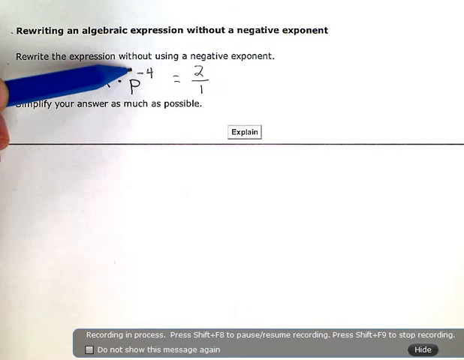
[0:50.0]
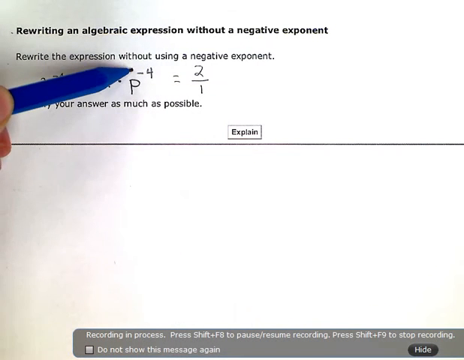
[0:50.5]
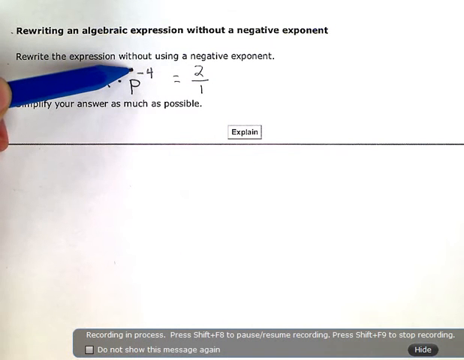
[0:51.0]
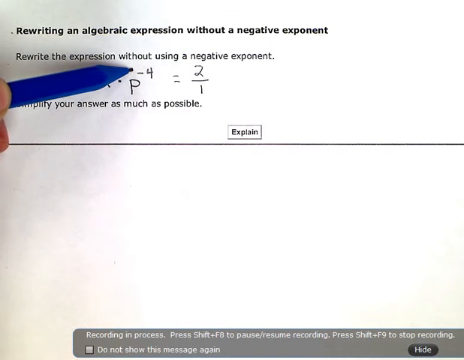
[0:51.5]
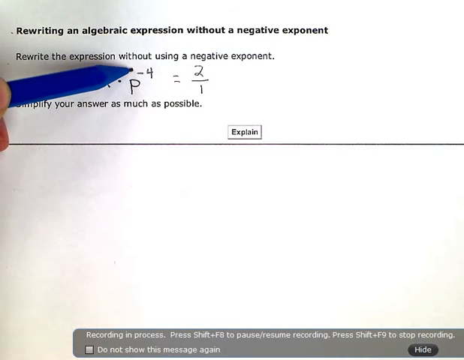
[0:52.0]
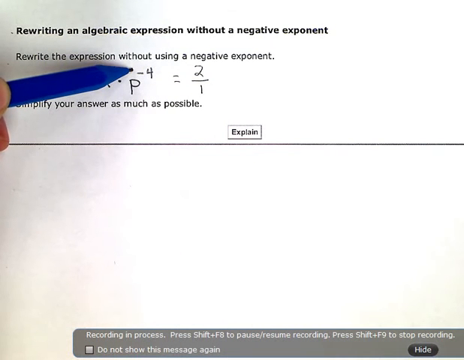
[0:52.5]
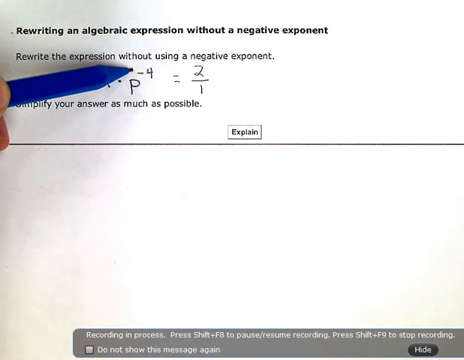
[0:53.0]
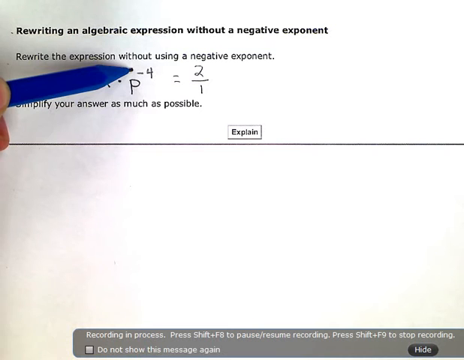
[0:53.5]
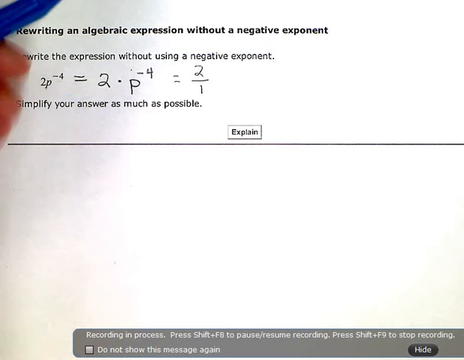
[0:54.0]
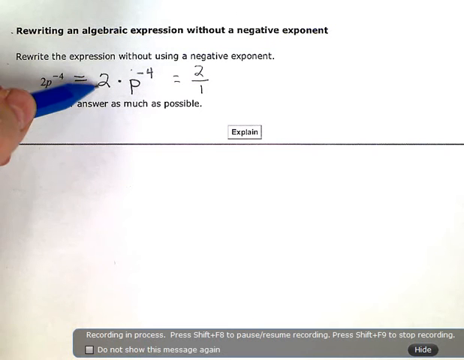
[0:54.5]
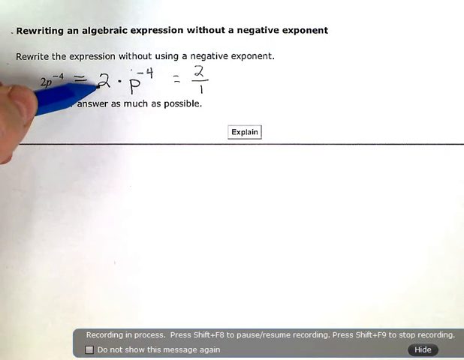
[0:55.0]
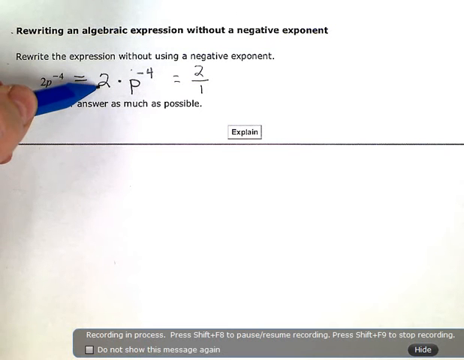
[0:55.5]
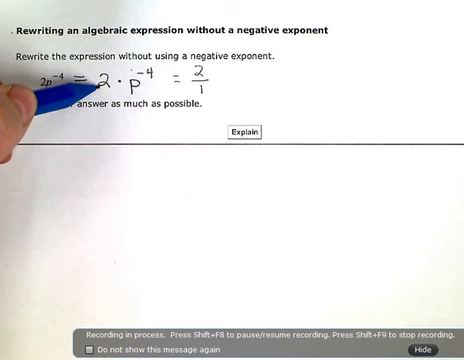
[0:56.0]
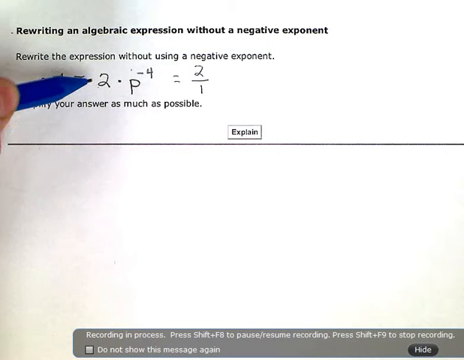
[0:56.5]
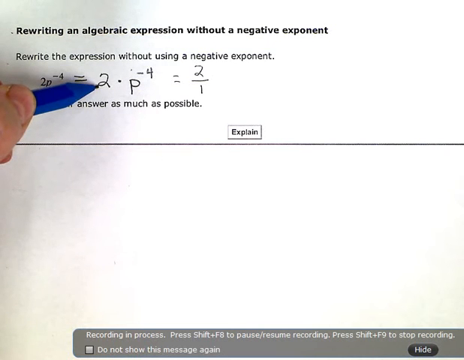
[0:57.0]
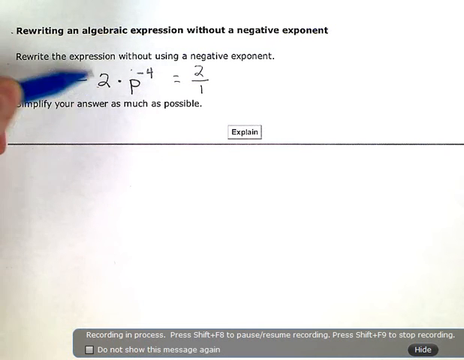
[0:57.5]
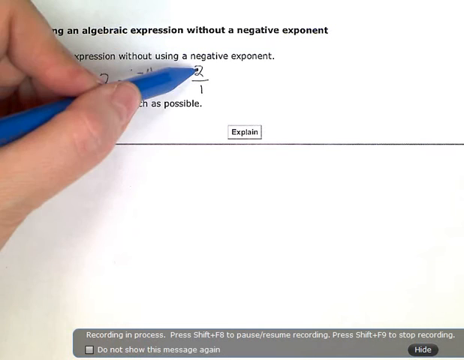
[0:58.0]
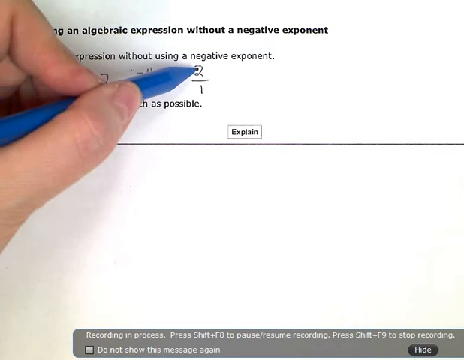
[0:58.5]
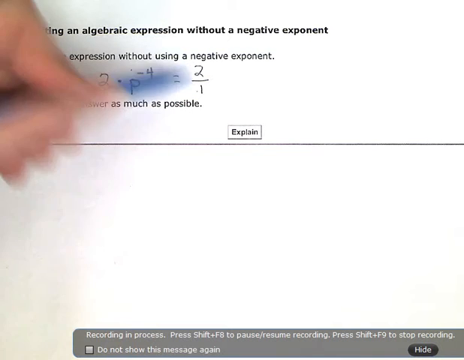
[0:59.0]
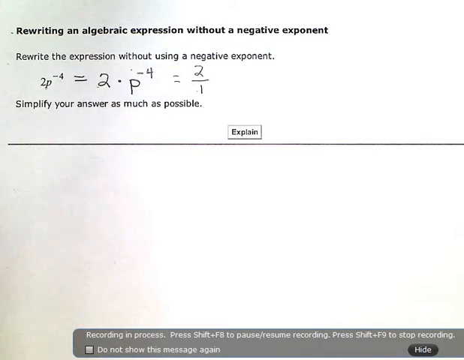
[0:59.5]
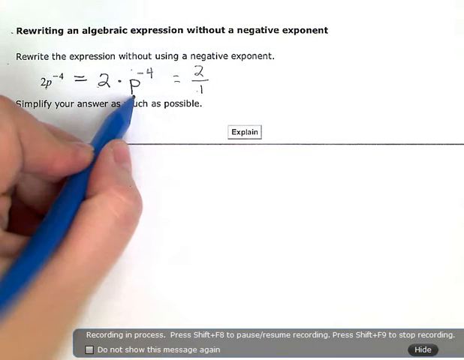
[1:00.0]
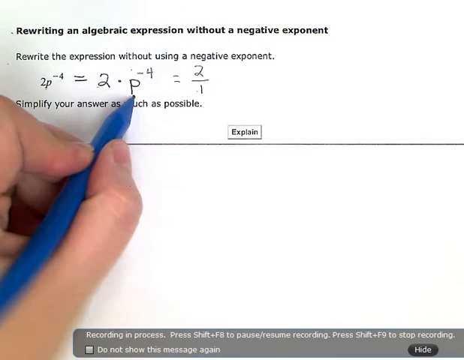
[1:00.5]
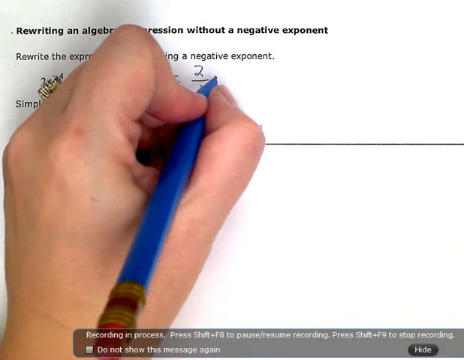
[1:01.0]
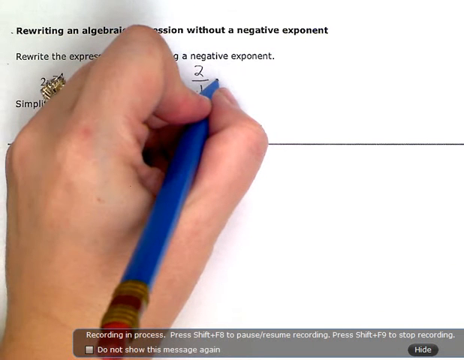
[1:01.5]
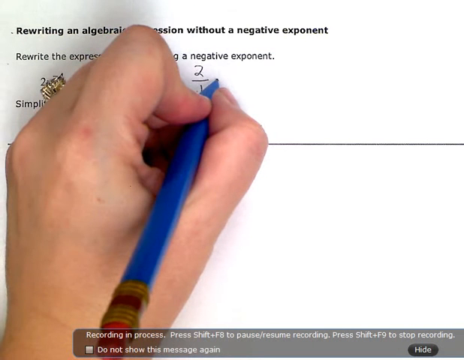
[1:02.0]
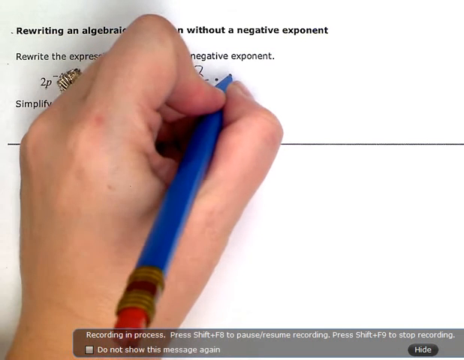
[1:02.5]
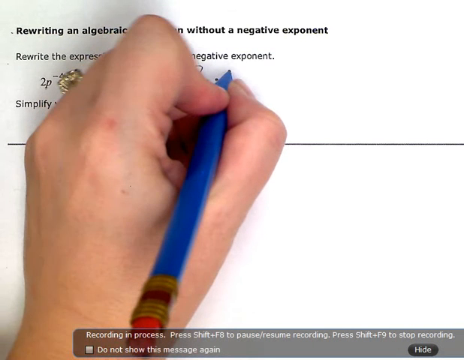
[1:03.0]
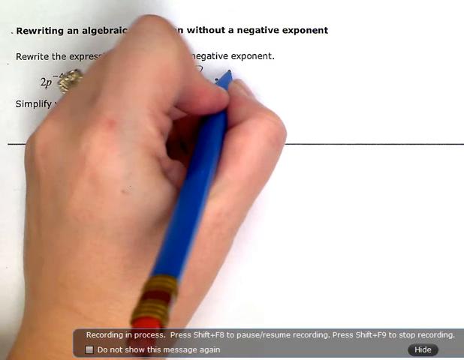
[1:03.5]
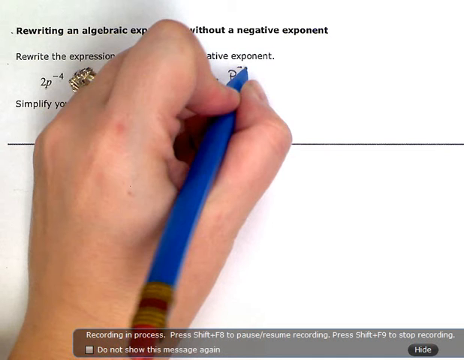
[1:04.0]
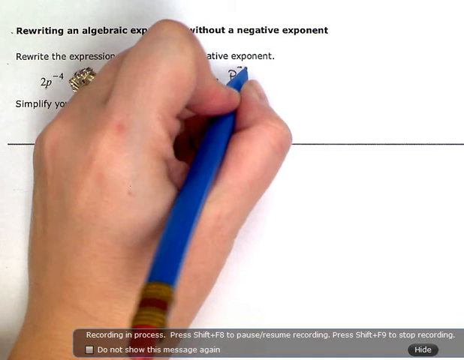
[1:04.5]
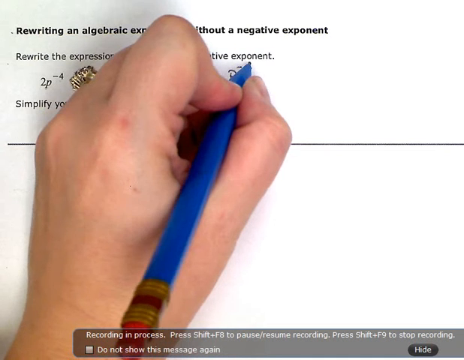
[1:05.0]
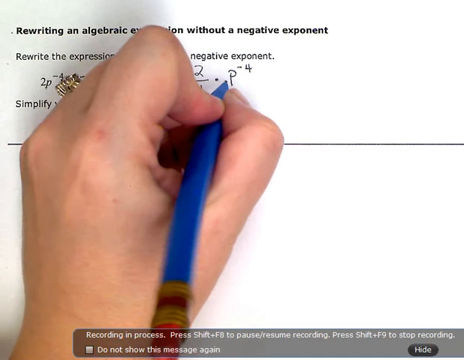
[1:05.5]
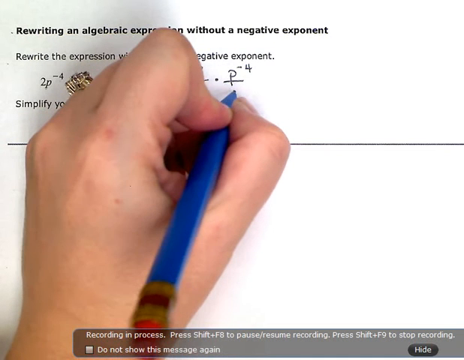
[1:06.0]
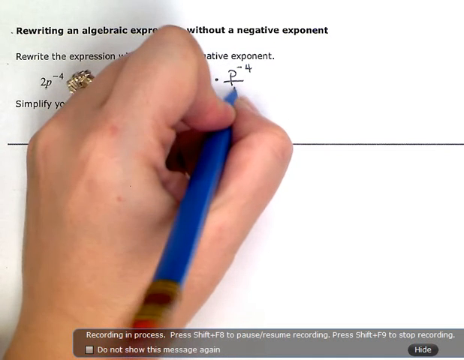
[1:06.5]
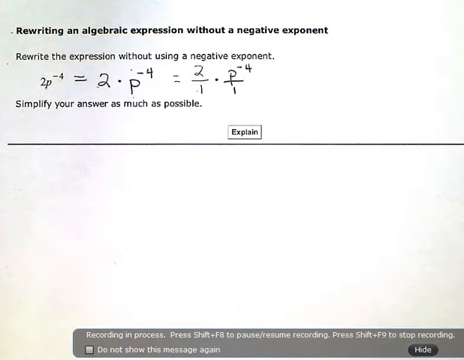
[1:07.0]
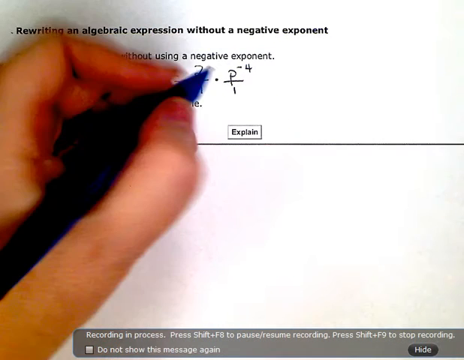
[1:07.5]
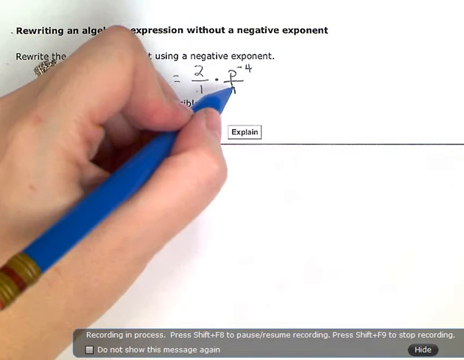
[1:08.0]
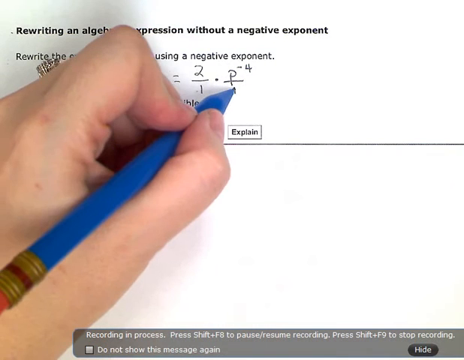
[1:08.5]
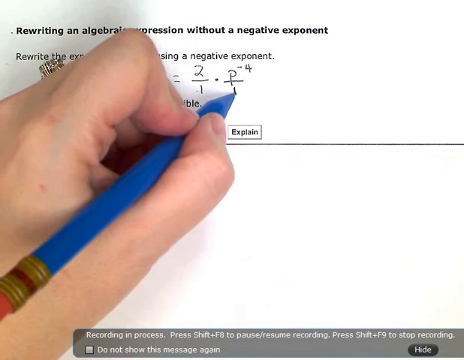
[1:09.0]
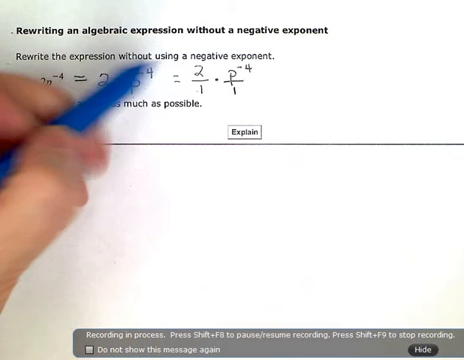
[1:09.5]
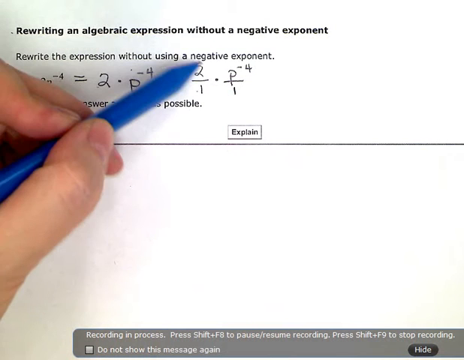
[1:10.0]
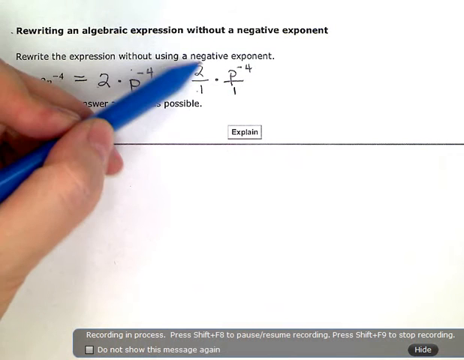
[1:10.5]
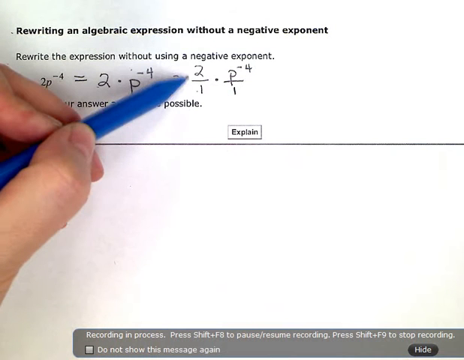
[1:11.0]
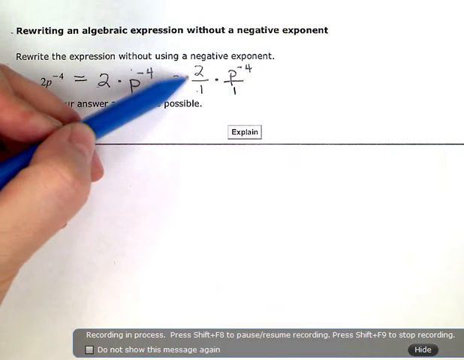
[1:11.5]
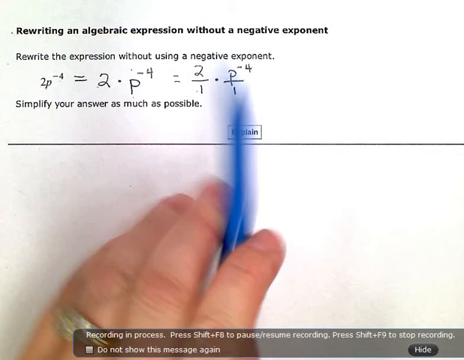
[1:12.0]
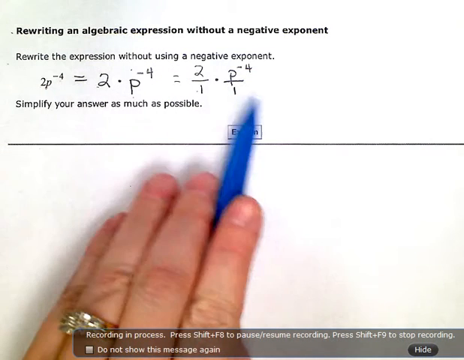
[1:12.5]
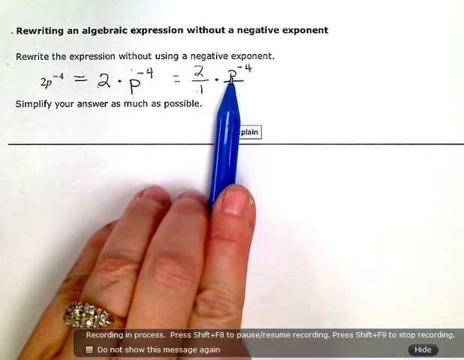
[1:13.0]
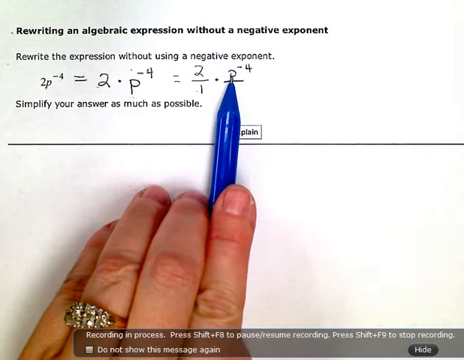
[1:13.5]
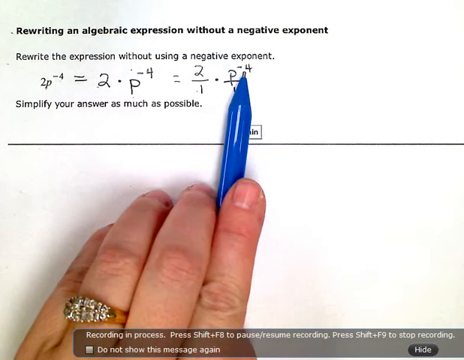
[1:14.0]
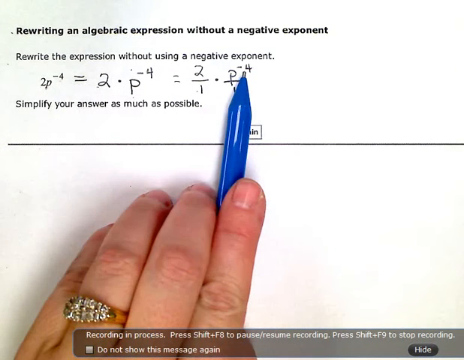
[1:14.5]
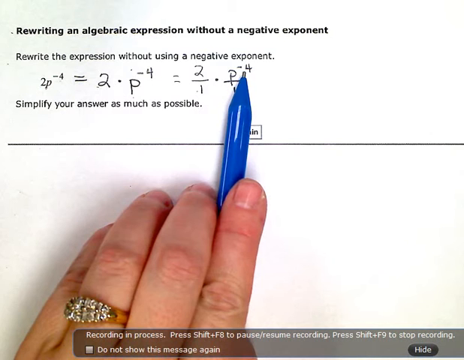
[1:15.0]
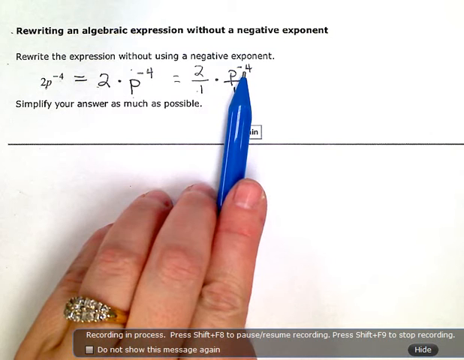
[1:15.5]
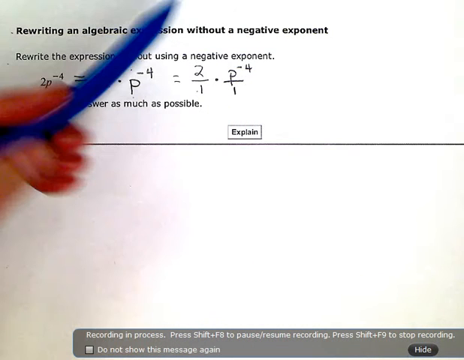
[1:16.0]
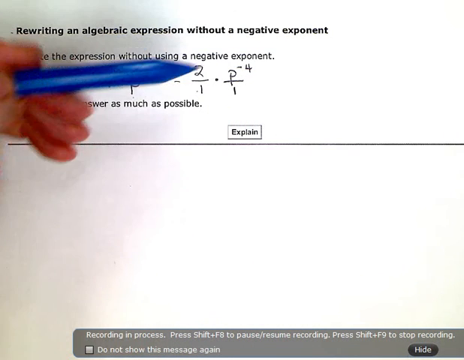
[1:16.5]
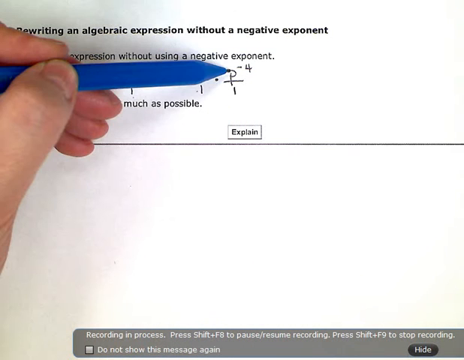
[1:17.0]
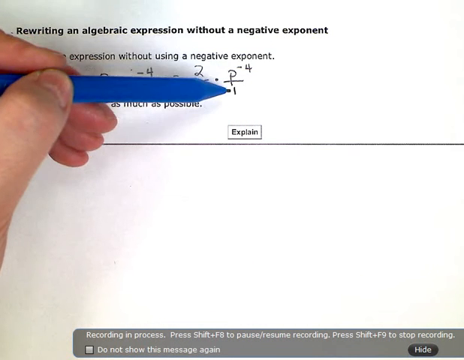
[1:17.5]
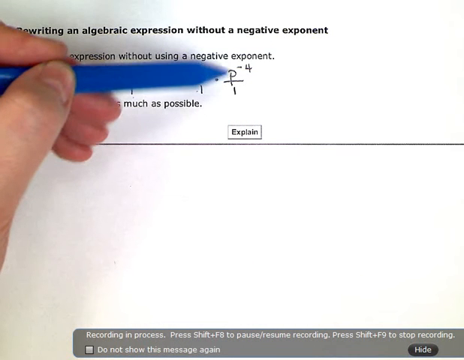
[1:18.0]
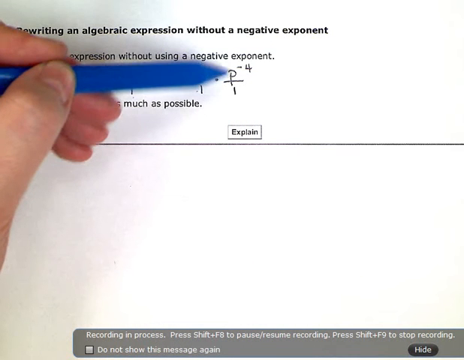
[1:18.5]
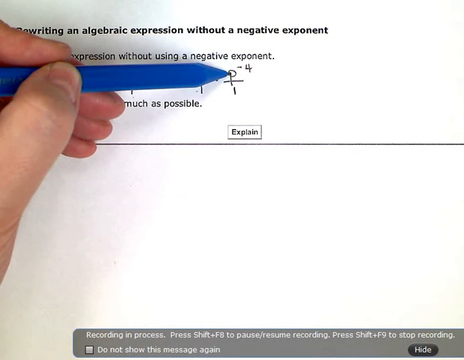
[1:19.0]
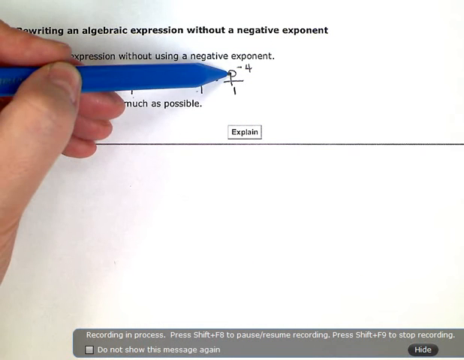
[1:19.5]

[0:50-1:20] Black borders are on each side, with a white page in the middle. At the top of the page is the text "rewriting an algebraic equation without a negative exponent," and underneath it, "rewrite the expression without using a negative exponent." A blue marker comes in from the left side and points at part of the visible equation, the P to the negative fourth power, and then at an equal sign with 2 over 1. The word "explain" appears at the bottom.